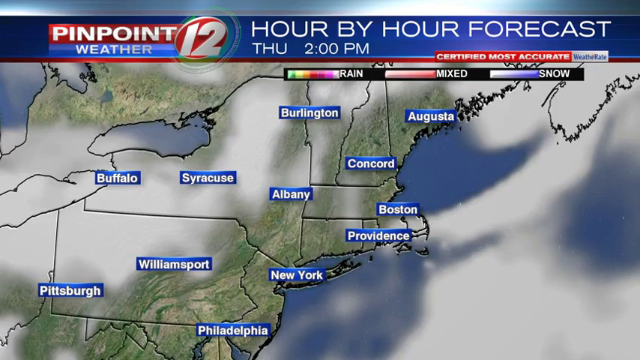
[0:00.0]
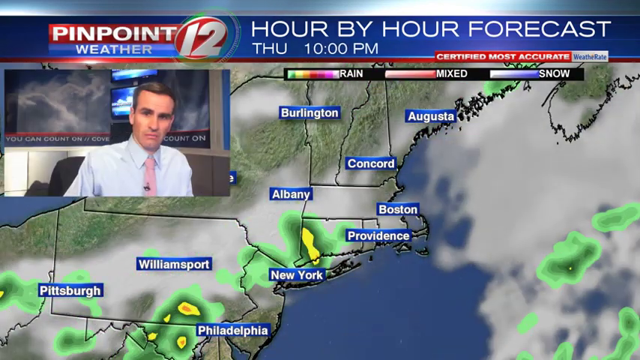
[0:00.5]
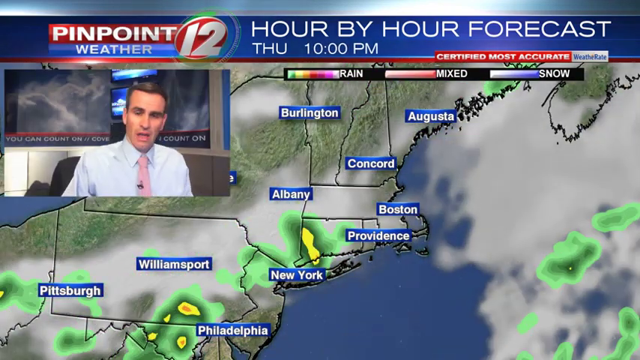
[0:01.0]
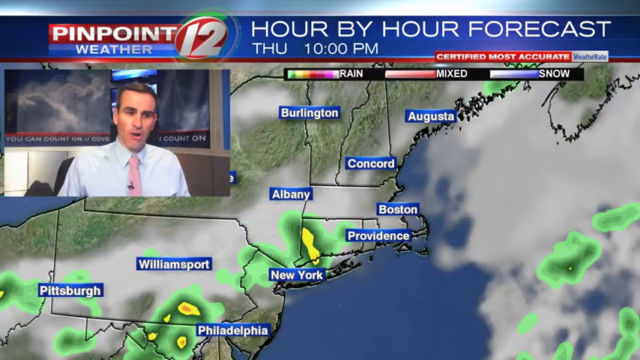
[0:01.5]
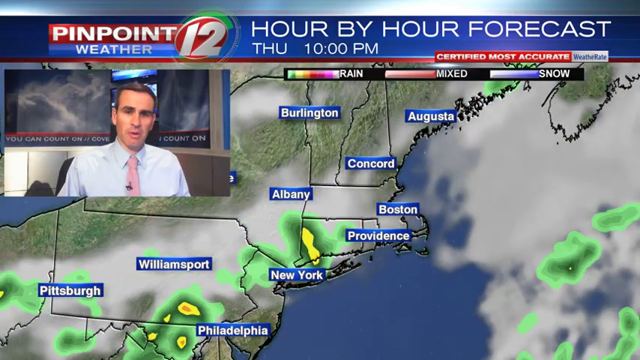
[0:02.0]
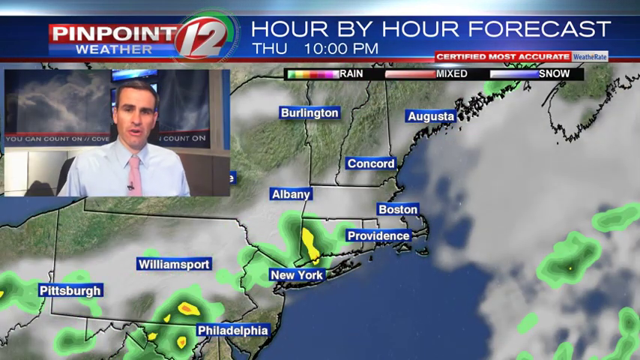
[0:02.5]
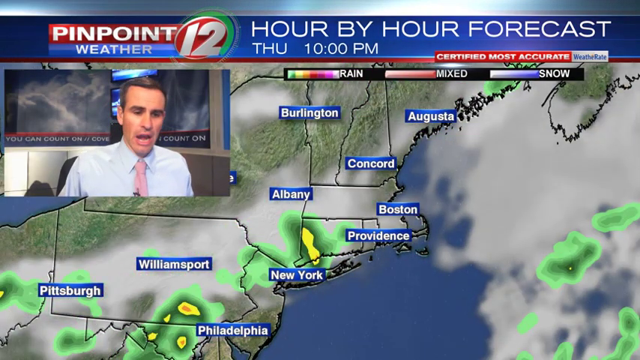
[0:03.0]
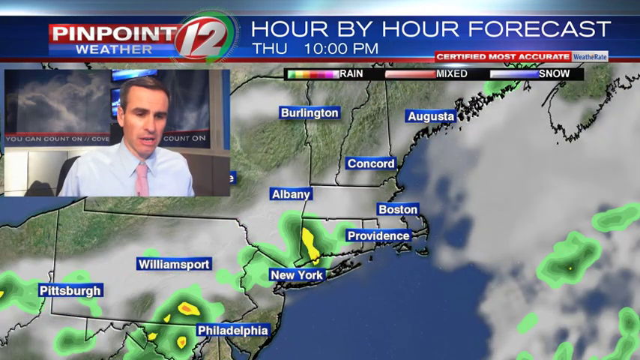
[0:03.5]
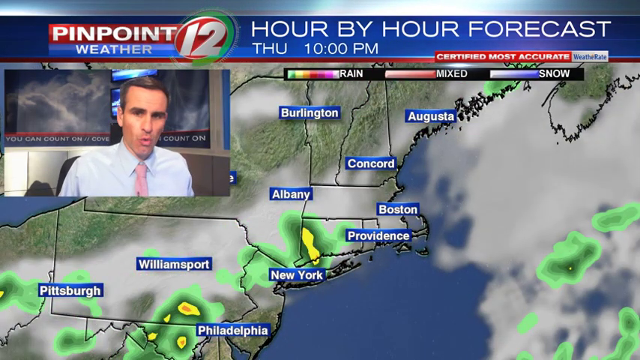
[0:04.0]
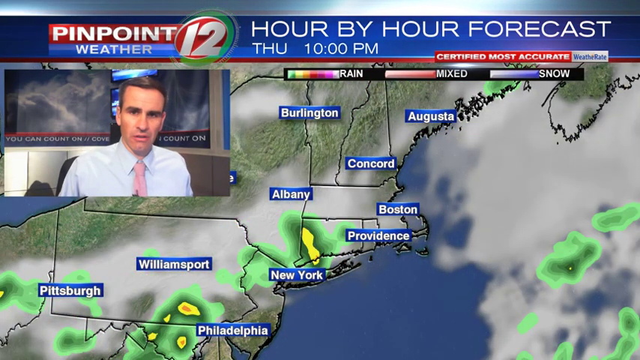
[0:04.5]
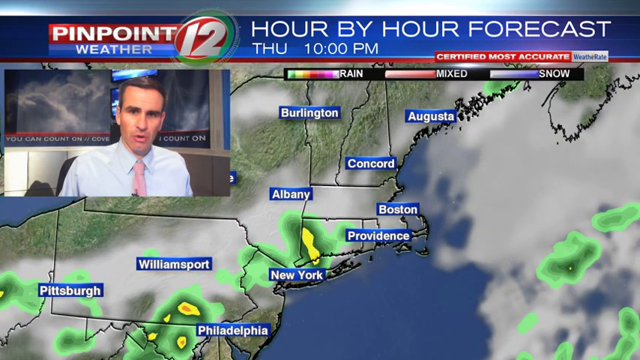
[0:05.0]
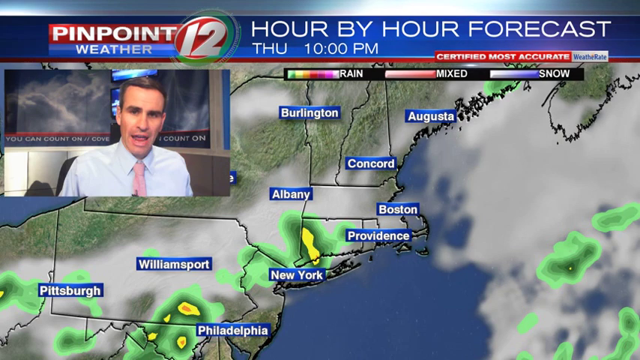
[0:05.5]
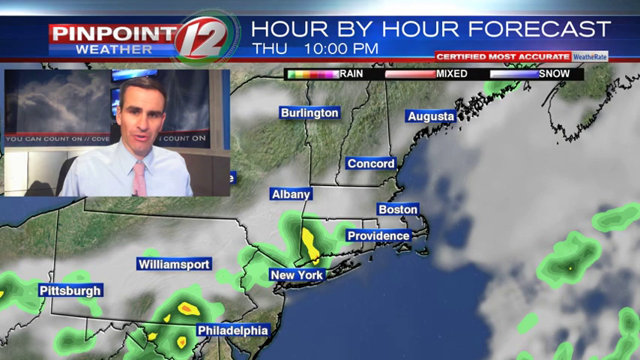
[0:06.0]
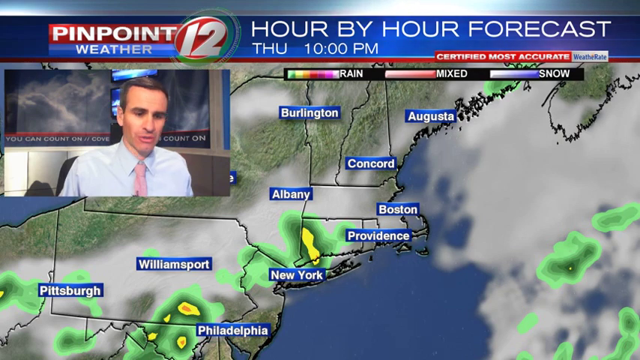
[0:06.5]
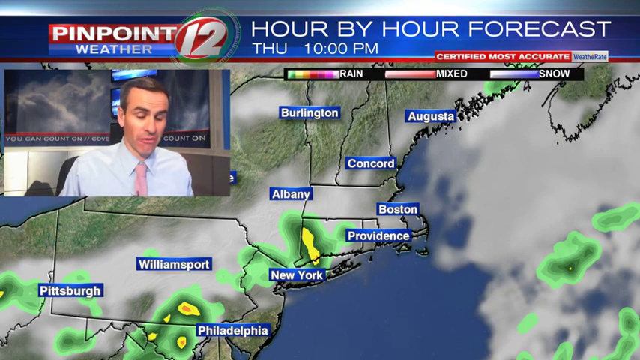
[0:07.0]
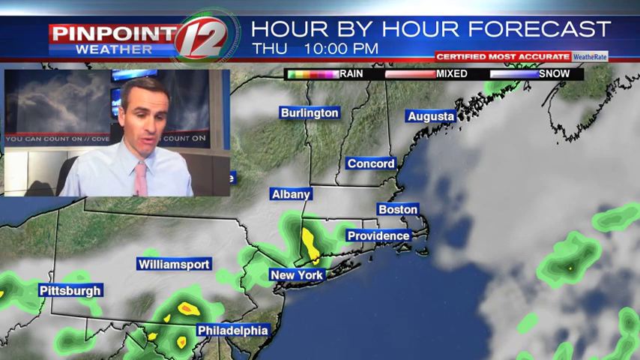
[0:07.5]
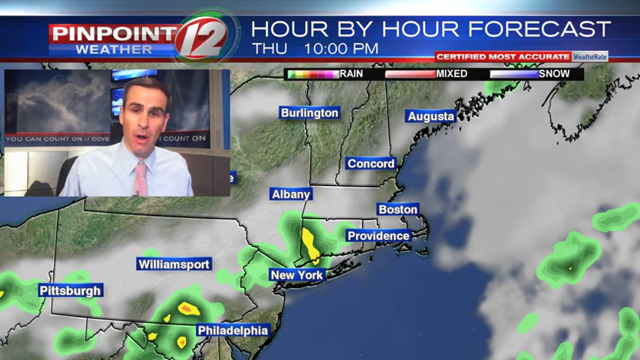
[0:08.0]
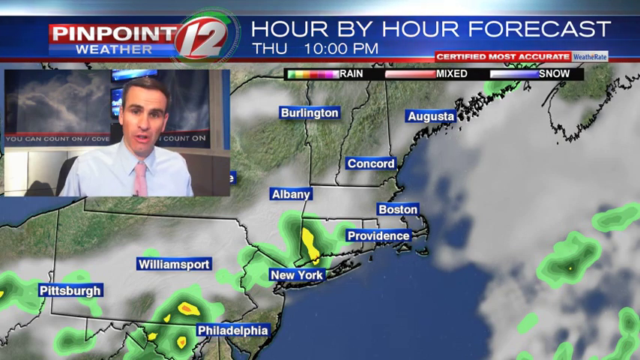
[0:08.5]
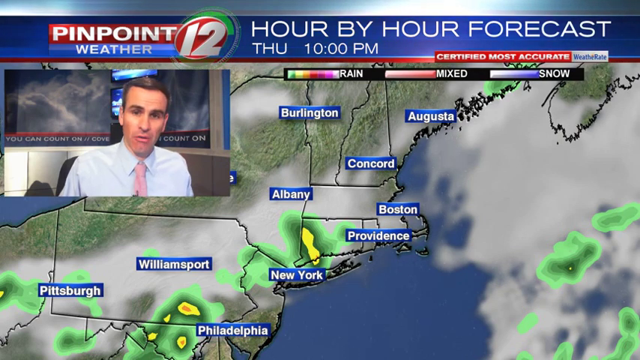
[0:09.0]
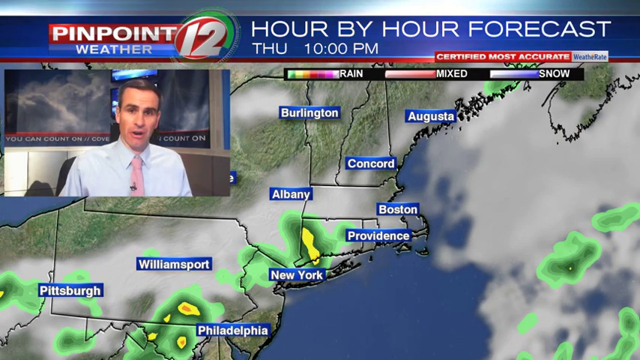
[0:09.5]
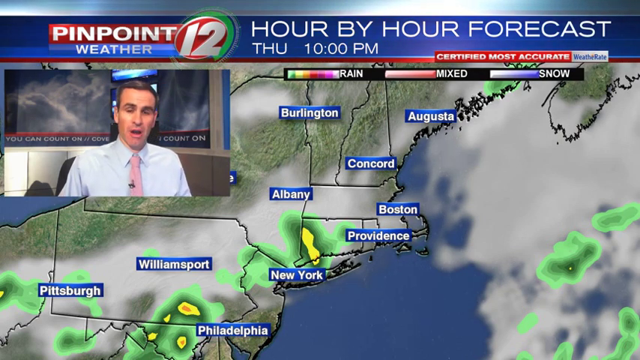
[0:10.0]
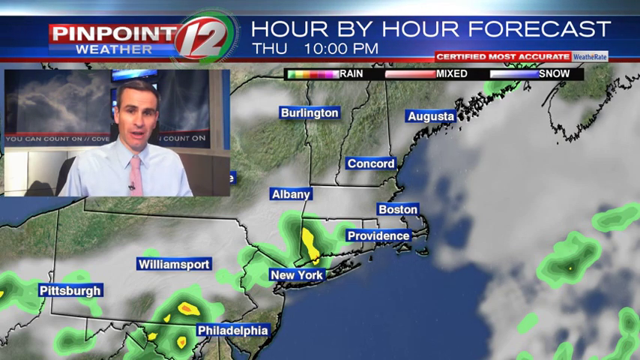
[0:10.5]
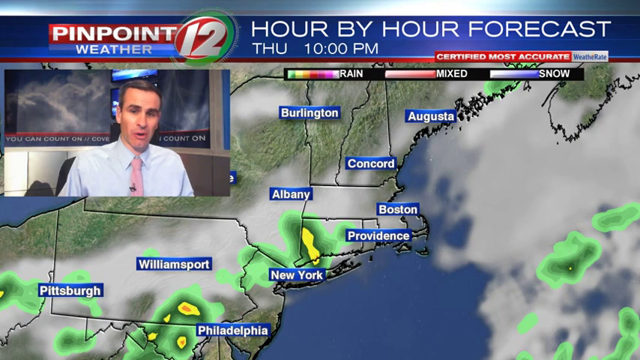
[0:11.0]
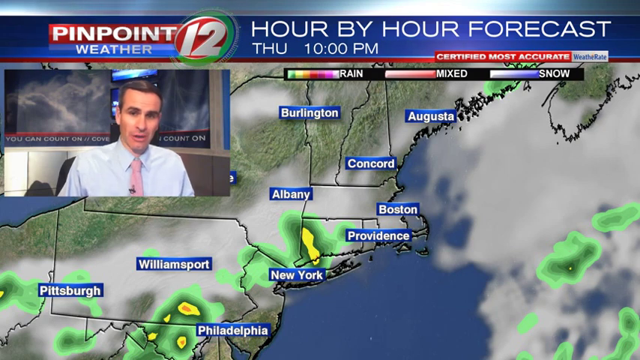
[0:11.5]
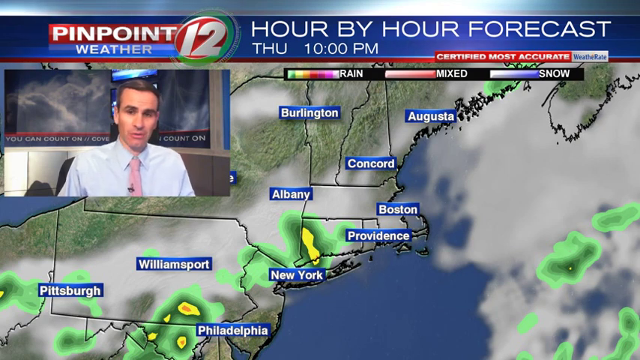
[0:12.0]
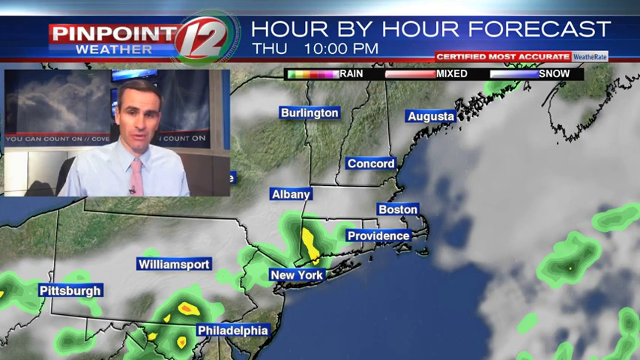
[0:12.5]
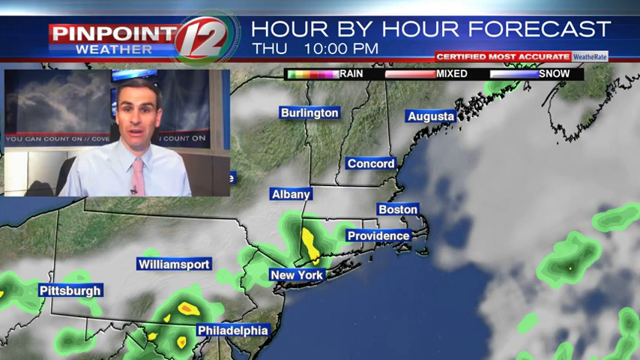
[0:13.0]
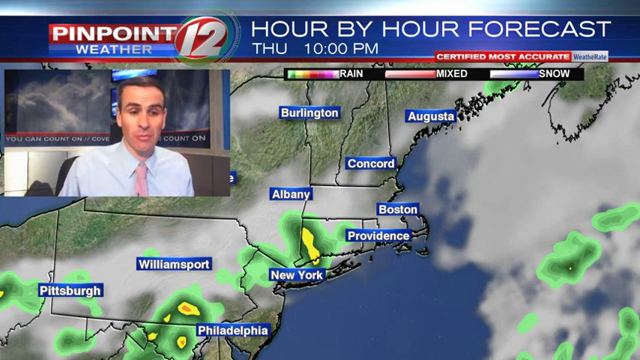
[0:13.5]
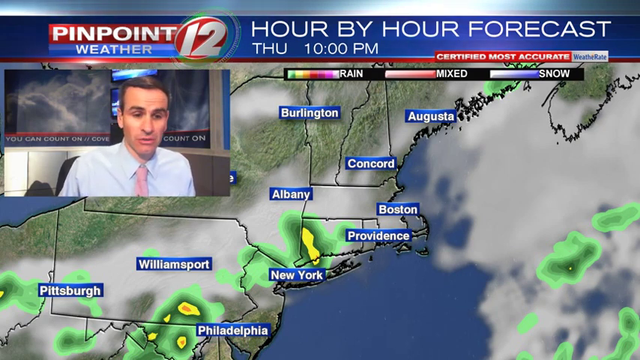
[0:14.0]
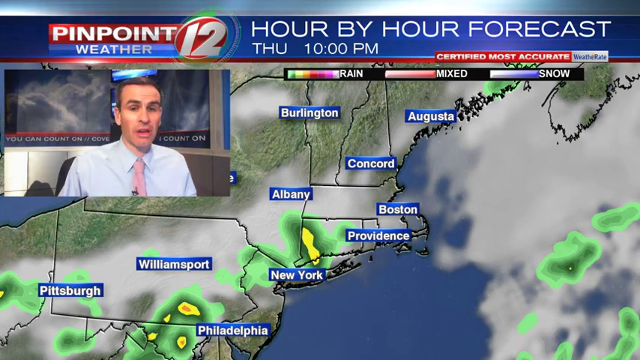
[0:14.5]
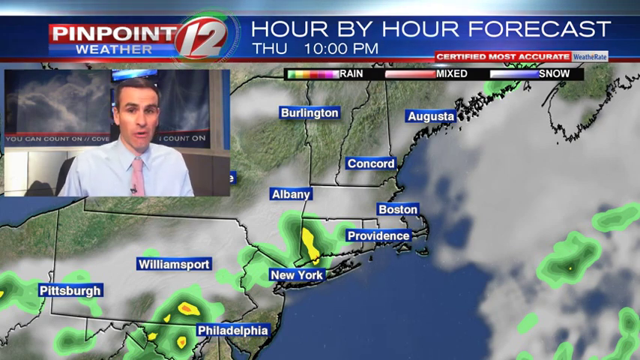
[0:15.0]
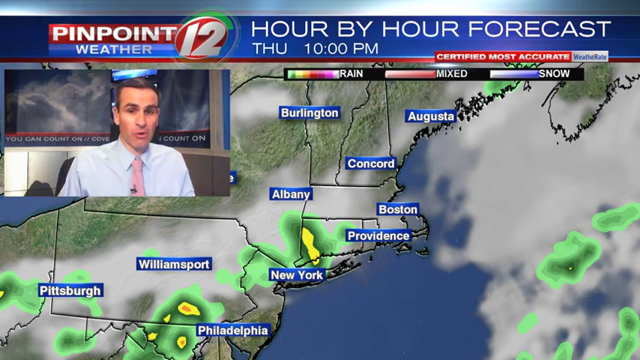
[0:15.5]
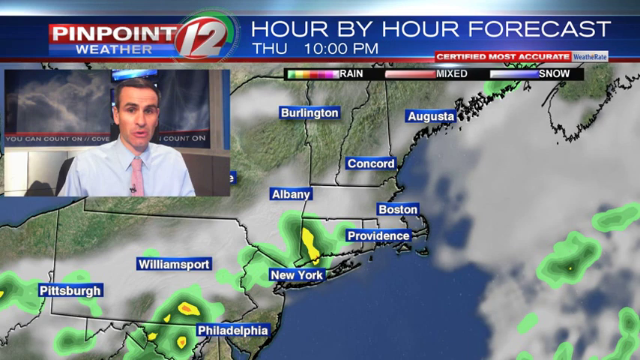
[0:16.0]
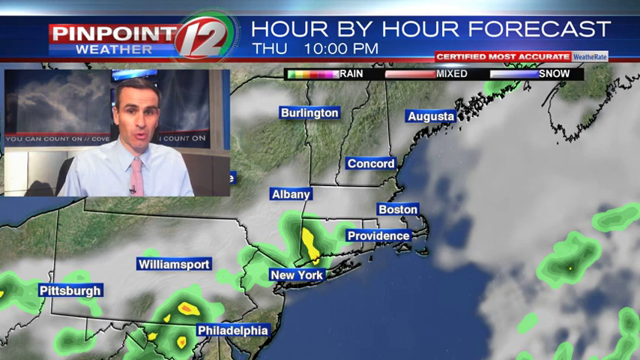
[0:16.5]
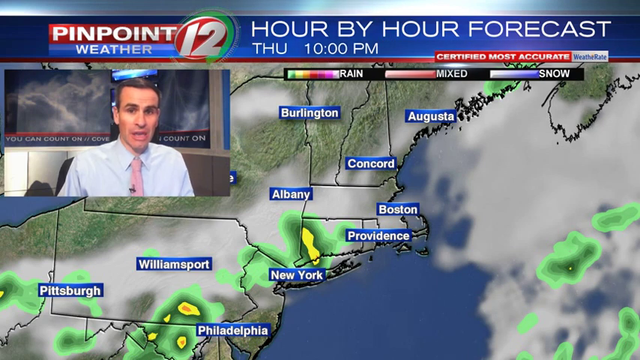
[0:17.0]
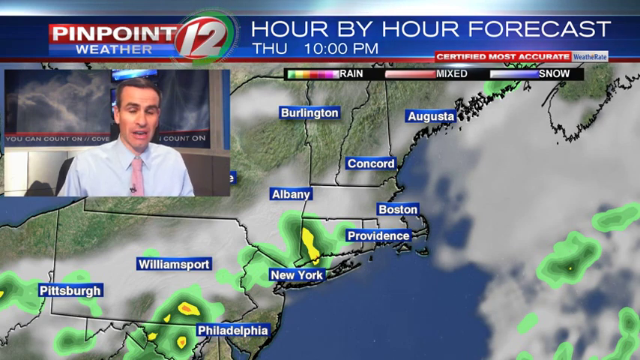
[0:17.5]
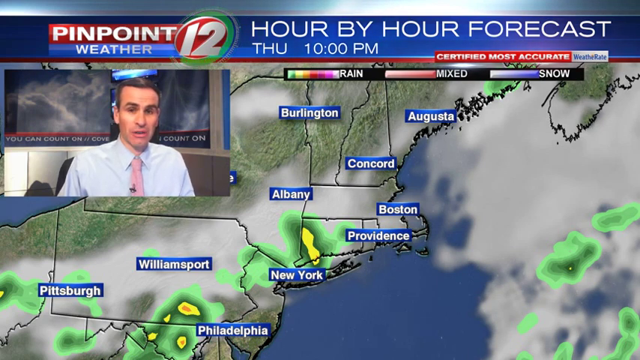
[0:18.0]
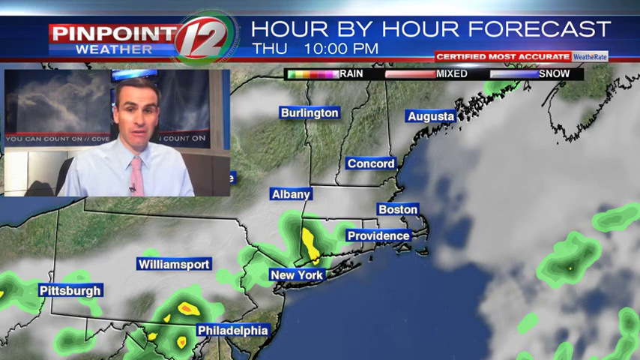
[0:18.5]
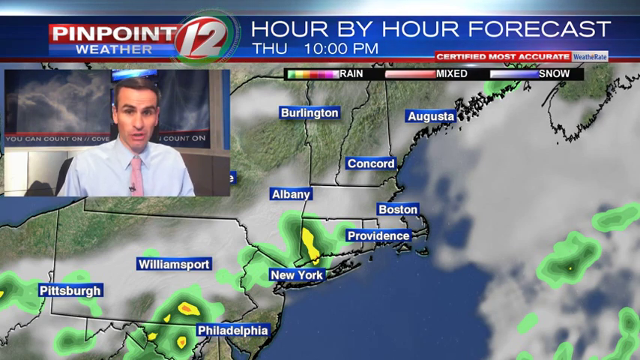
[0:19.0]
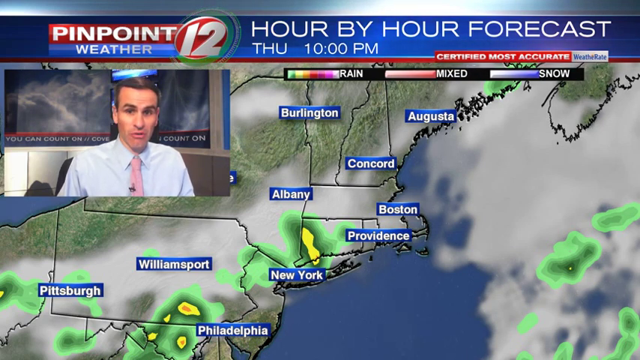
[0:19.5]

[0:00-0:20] A drawn map shaded in green fills the view, with white clouds passing over different areas. Various areas are labeled with blue rectangles containing white text. The map changes as the clouds move quickly across it, and dark green patches with yellow centers also move across the locations. On the left side of the map, a video feed appears showing a man with a short haircut, wearing a light-colored button-down shirt and a pink tie. He begins speaking directly to the camera, occasionally looking down and to his left before looking back at the camera, and does this again. Then he moves backward, away from the camera.